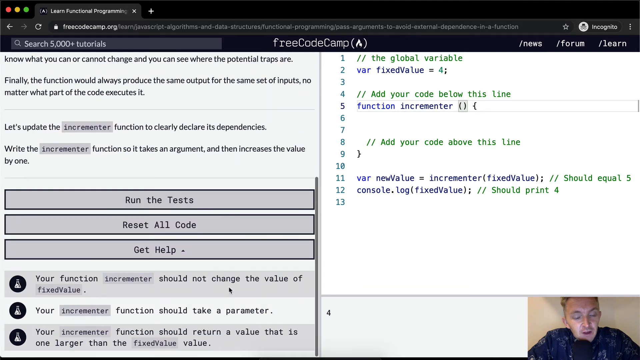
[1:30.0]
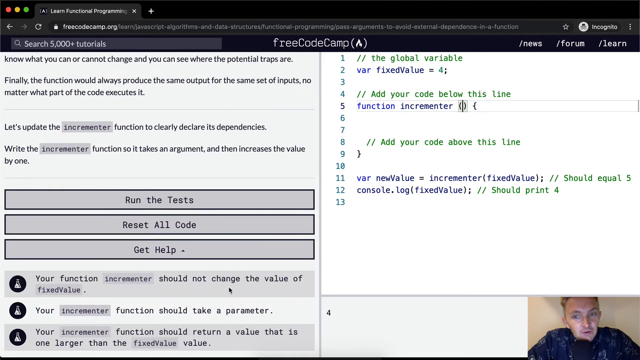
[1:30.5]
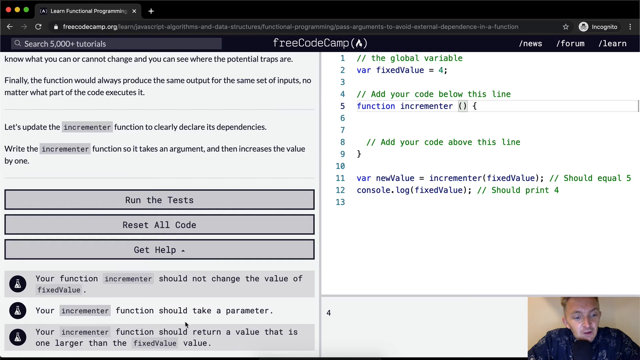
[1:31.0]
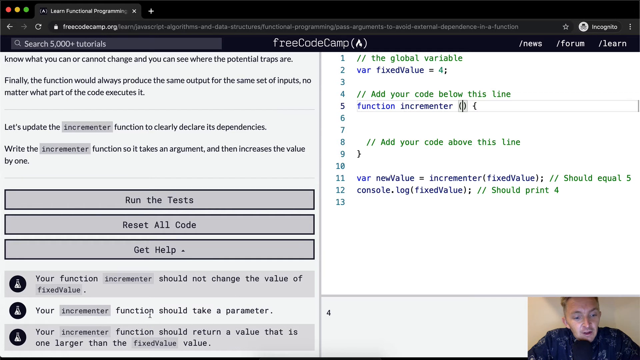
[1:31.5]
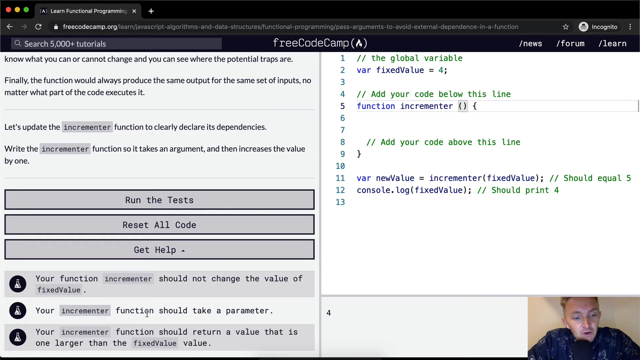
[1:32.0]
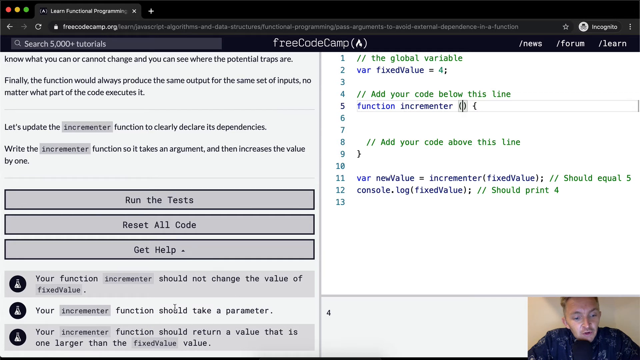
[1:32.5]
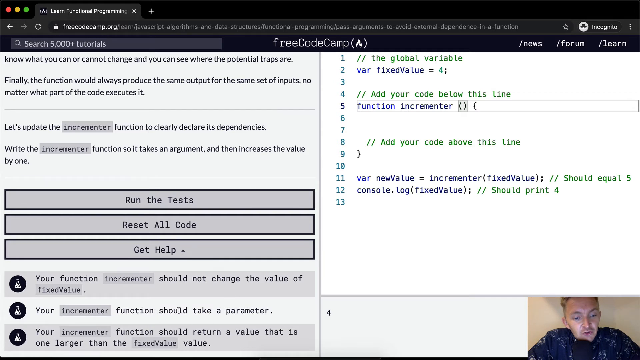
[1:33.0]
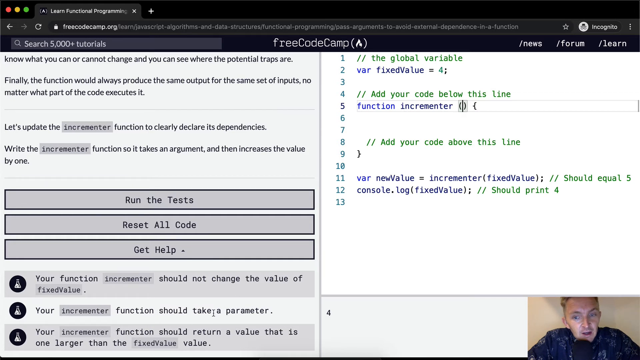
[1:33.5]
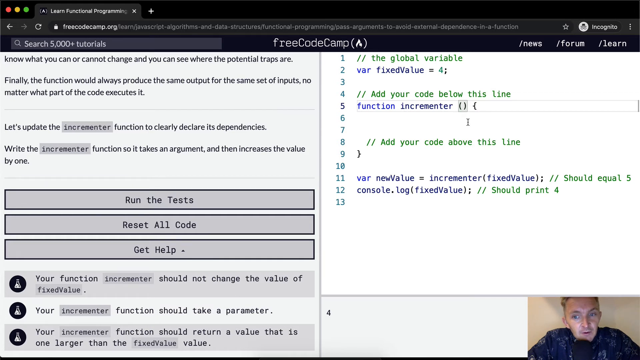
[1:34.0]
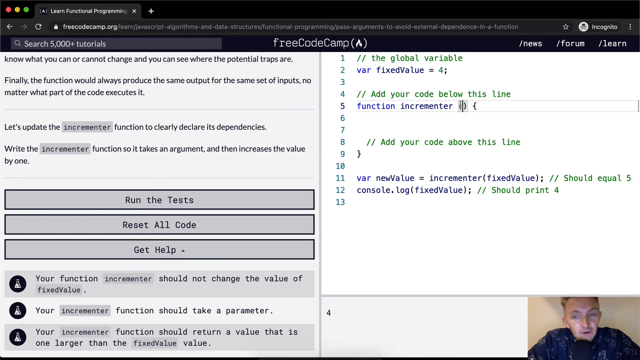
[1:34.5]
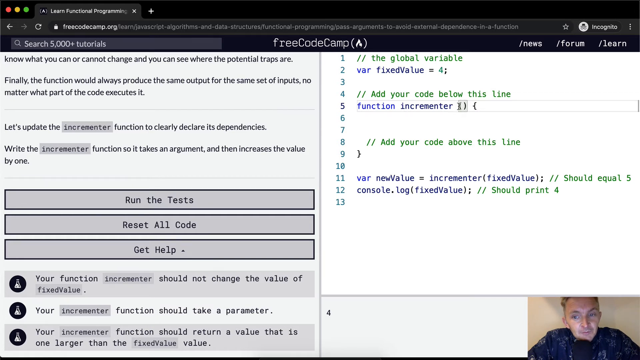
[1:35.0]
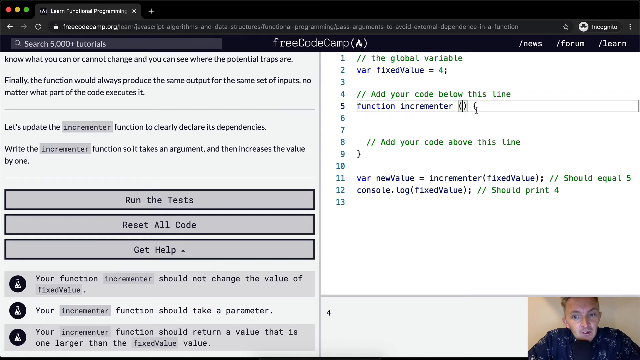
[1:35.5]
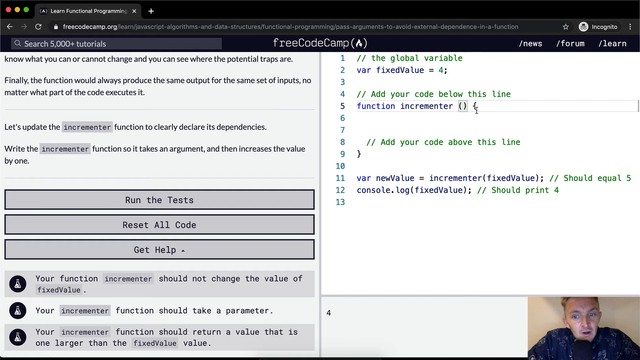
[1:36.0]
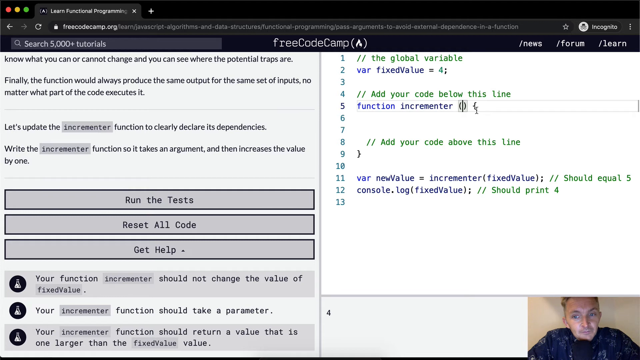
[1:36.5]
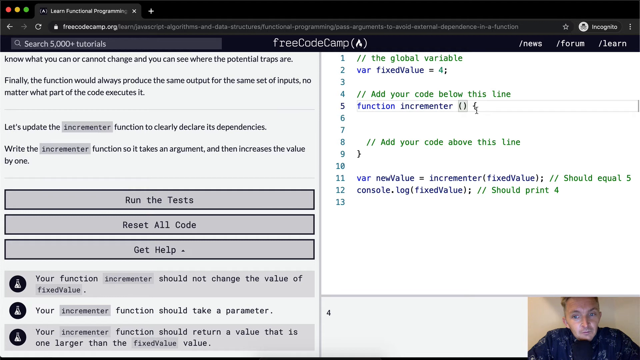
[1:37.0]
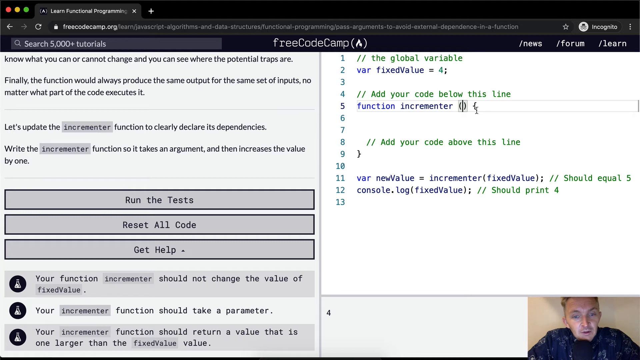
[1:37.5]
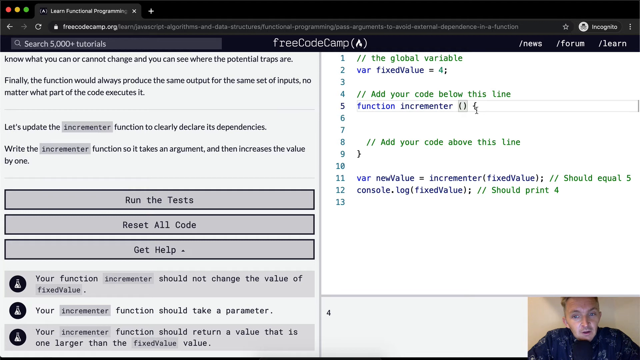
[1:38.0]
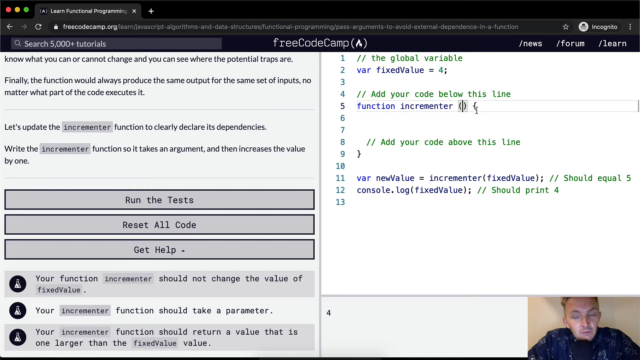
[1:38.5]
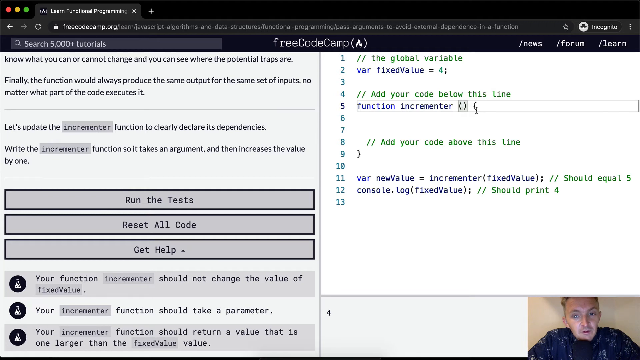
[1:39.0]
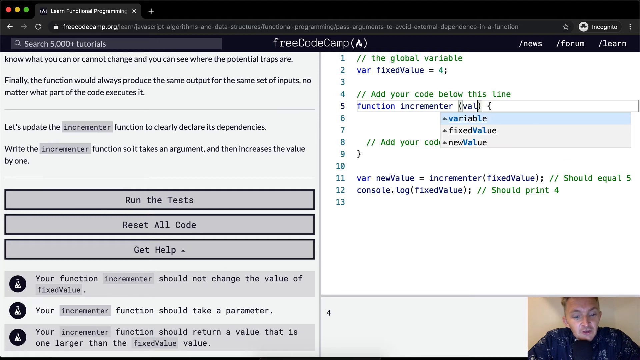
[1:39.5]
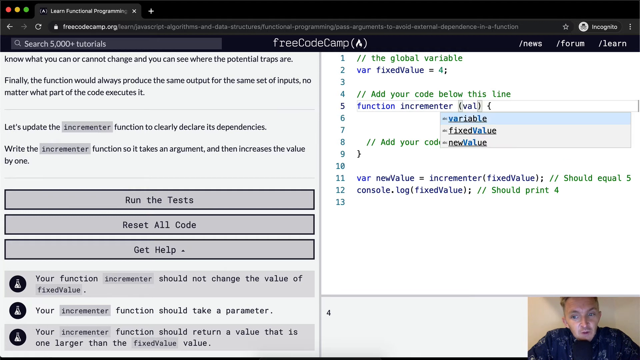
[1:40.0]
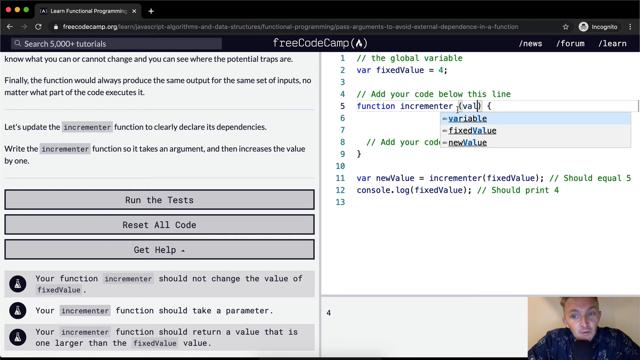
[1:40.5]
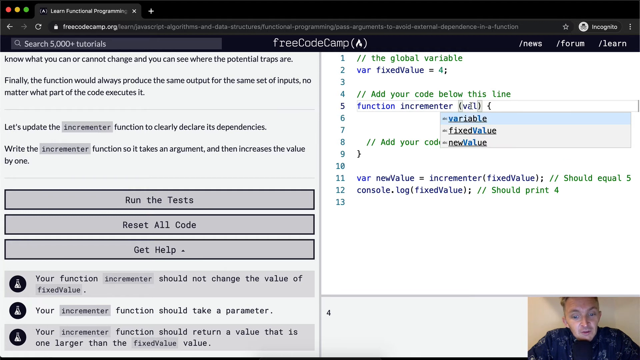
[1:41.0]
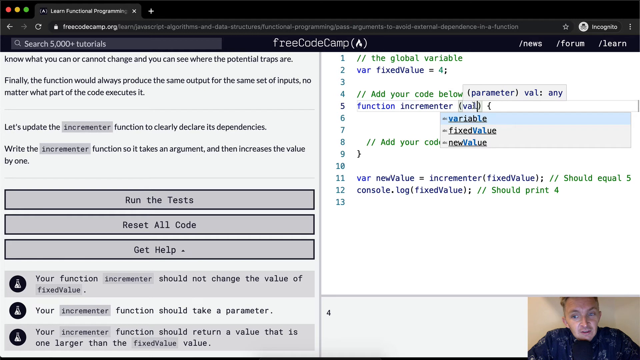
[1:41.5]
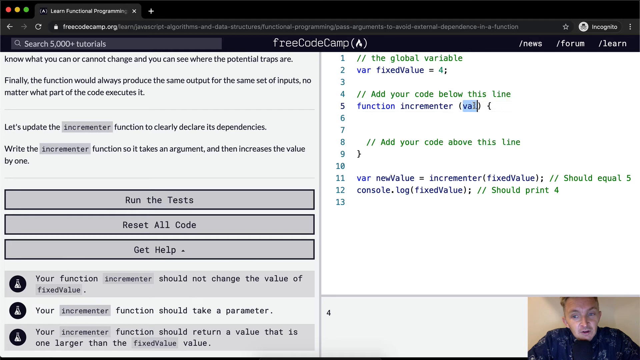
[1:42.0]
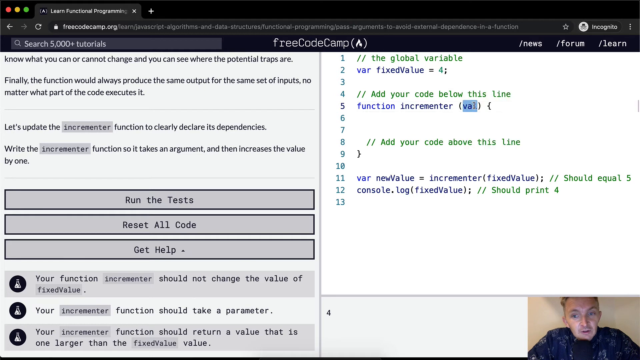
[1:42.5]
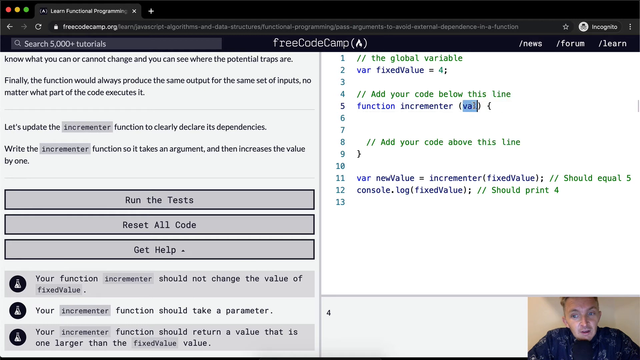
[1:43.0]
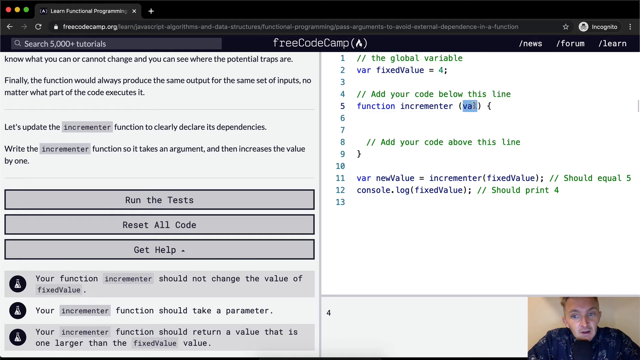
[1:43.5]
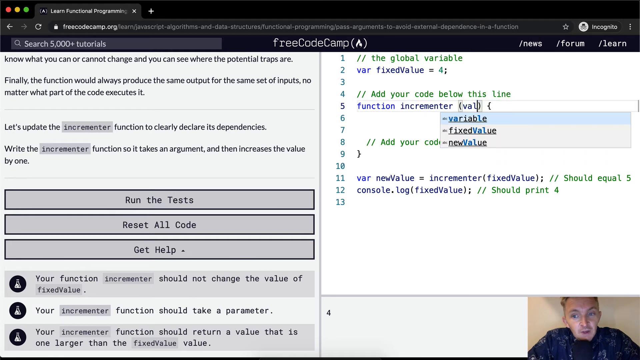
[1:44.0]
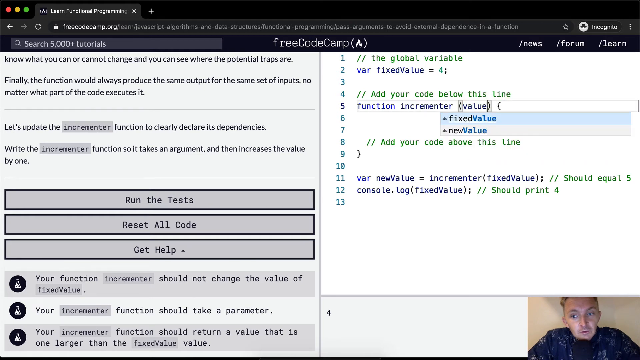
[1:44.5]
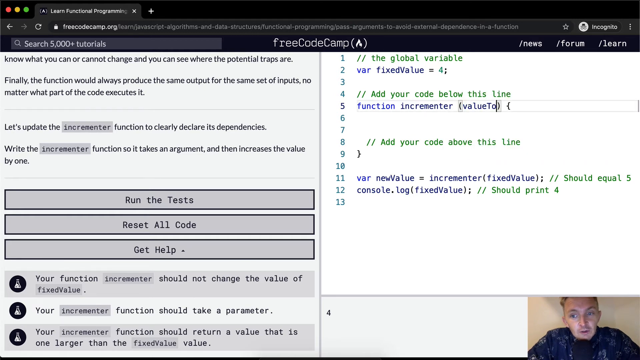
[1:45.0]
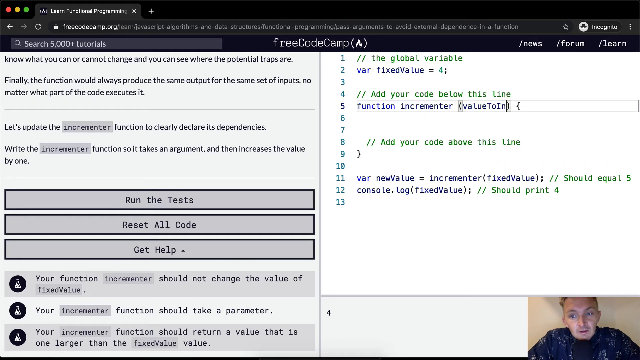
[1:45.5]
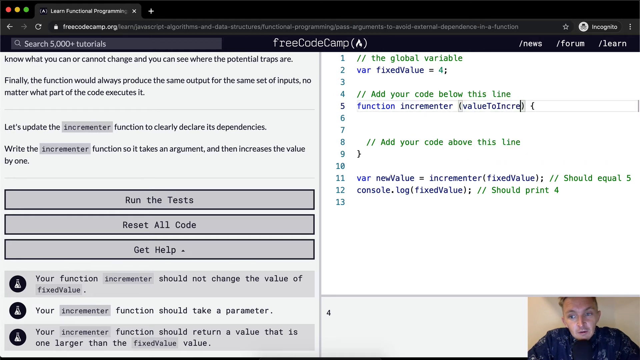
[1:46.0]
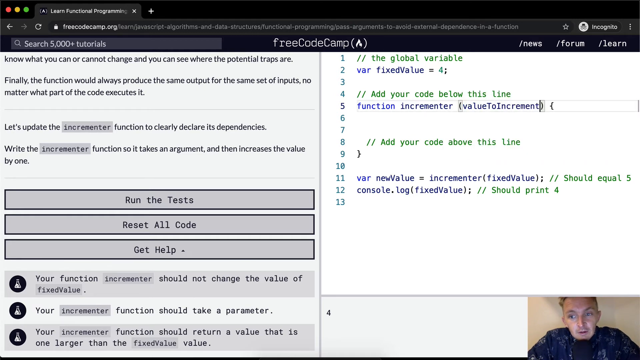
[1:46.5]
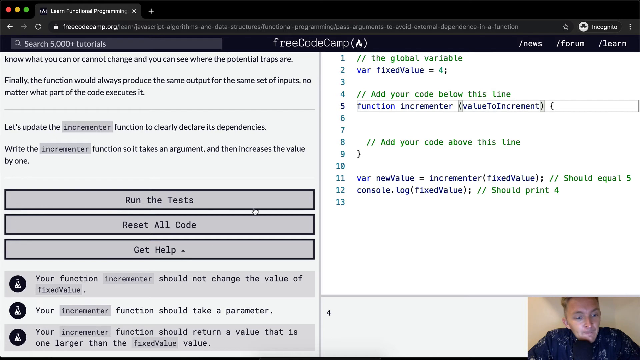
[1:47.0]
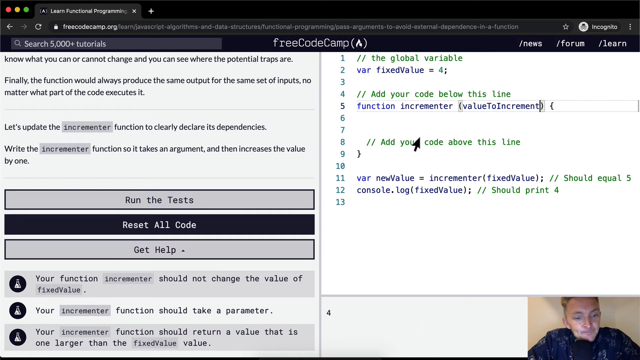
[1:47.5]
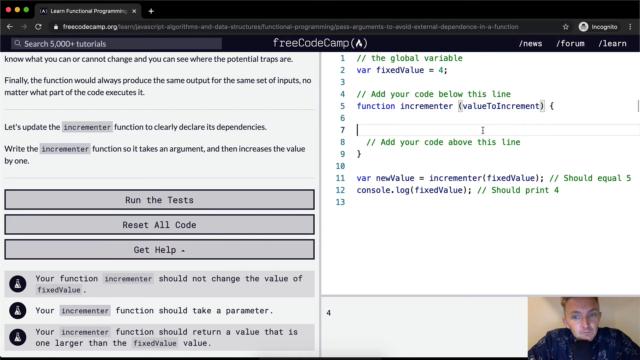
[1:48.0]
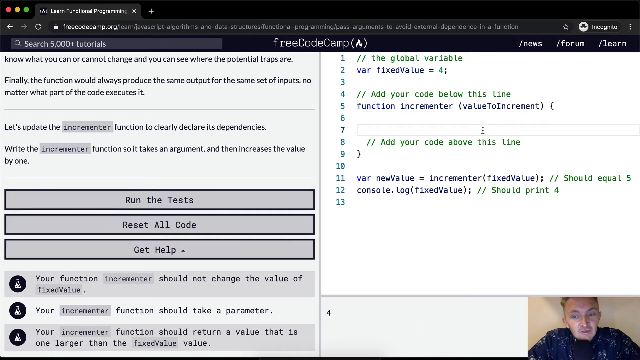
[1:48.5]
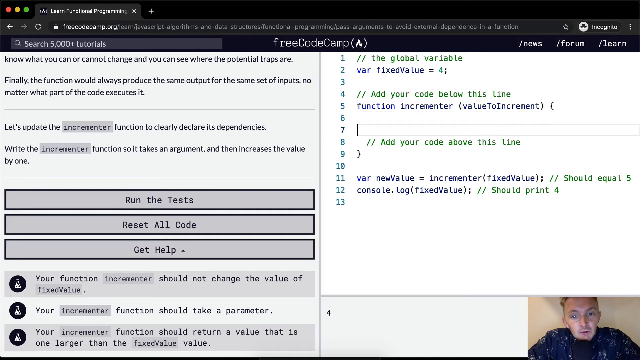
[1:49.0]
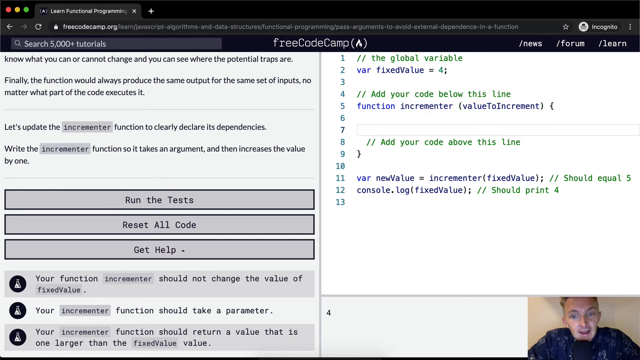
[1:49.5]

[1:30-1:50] Requirements read "your increment function should take a parameter" and "your increment function should return a value that is one larger." Inside the brackets of the increment function, a value to increment is set, and after that a run test is shown. The steps are shown on the right side of the free code camp page, with options to reset all code or run the test.